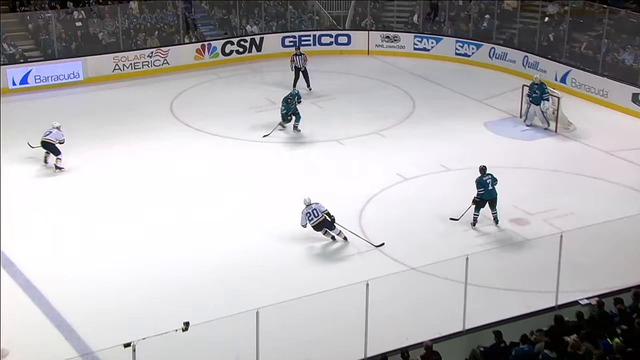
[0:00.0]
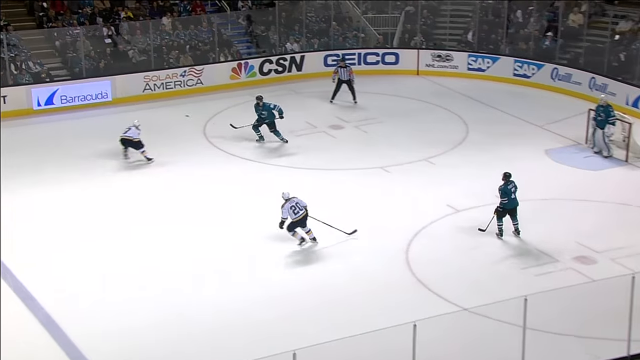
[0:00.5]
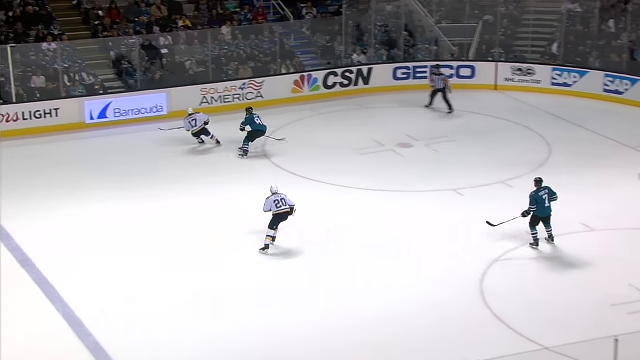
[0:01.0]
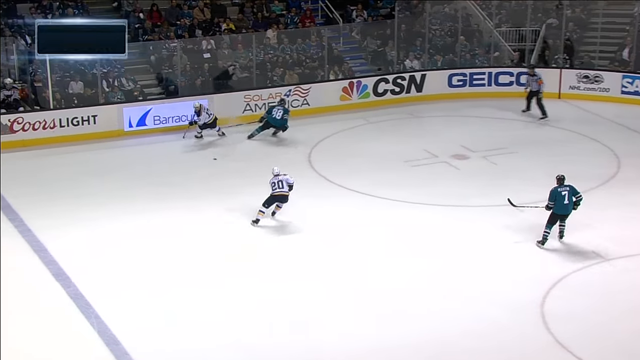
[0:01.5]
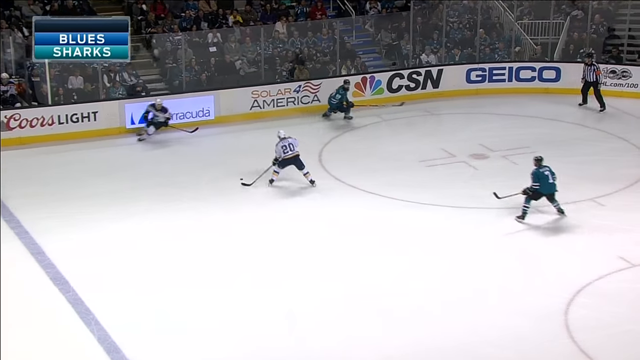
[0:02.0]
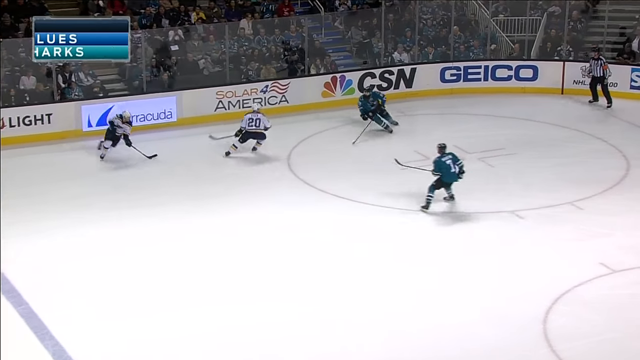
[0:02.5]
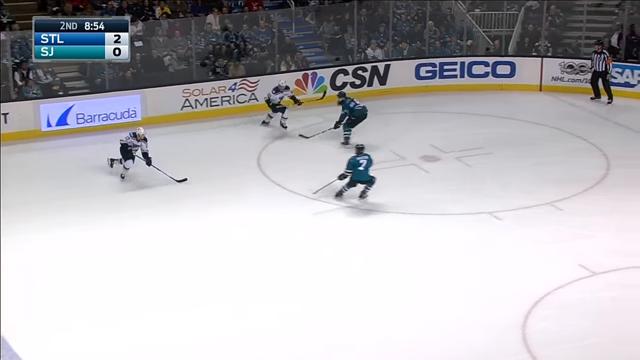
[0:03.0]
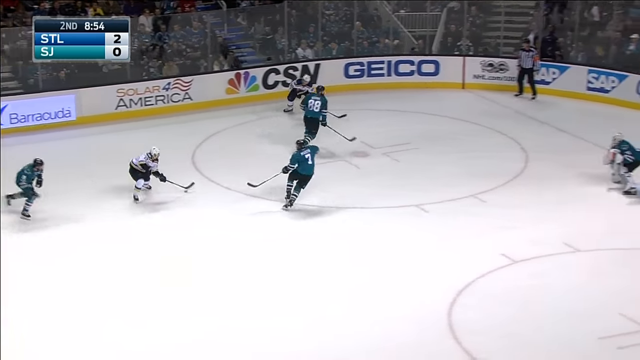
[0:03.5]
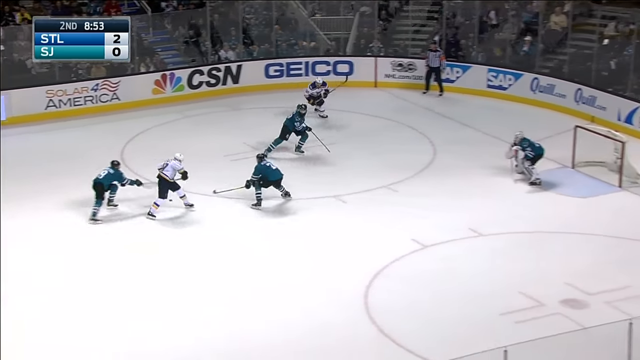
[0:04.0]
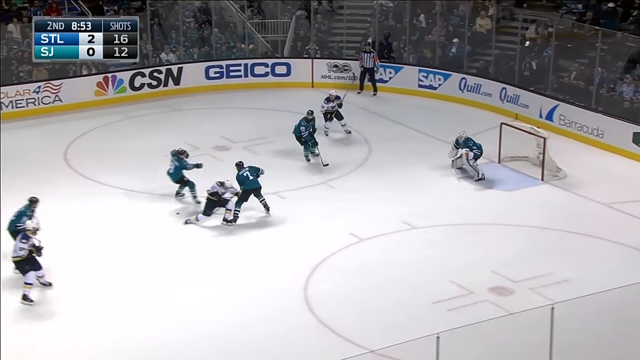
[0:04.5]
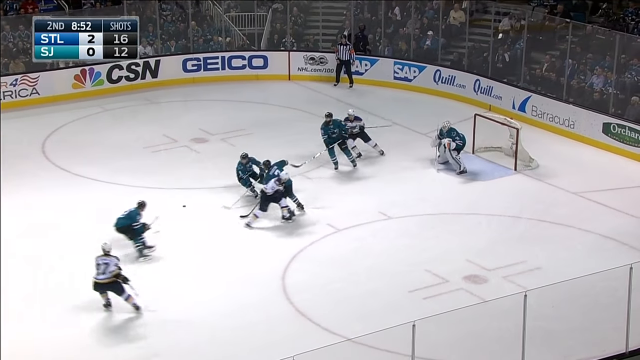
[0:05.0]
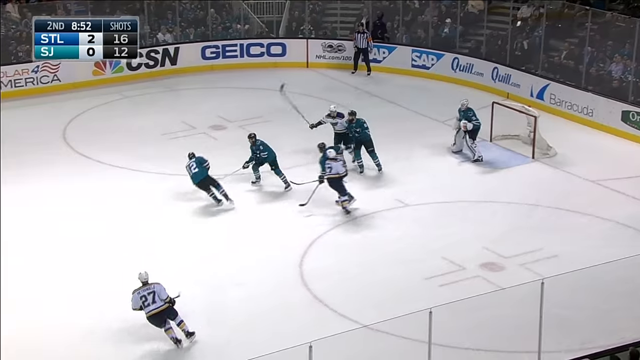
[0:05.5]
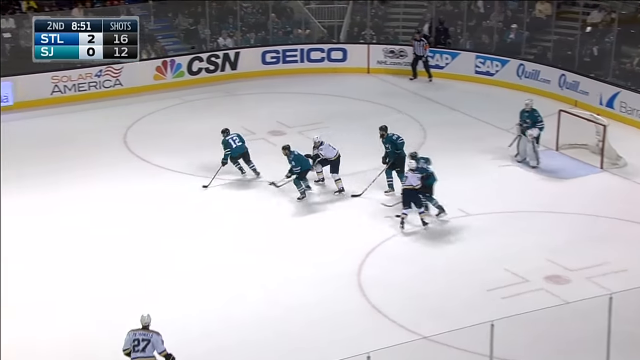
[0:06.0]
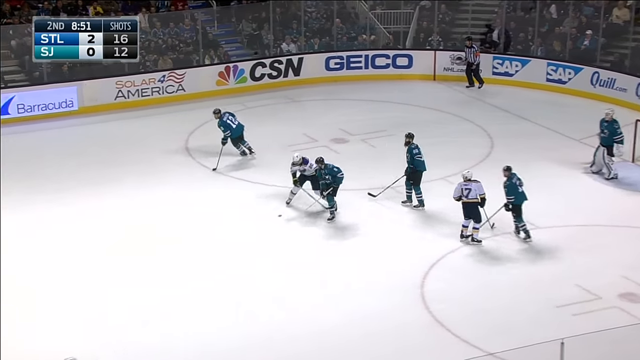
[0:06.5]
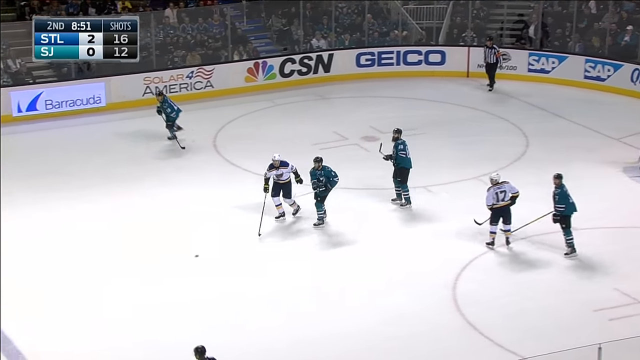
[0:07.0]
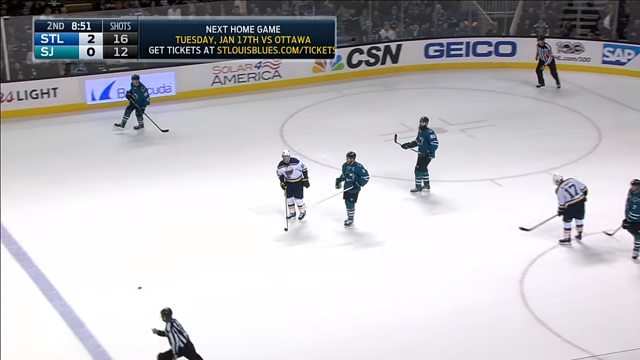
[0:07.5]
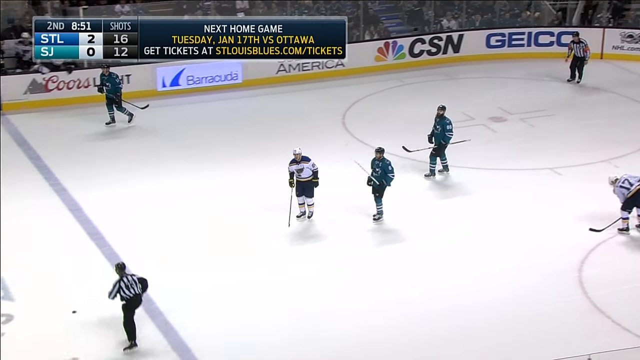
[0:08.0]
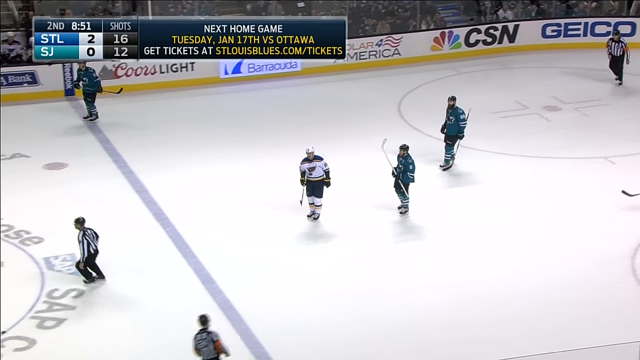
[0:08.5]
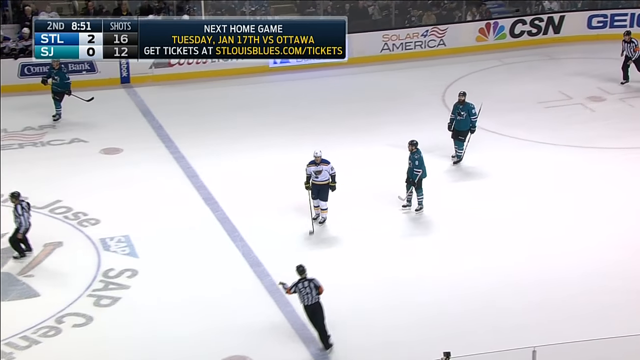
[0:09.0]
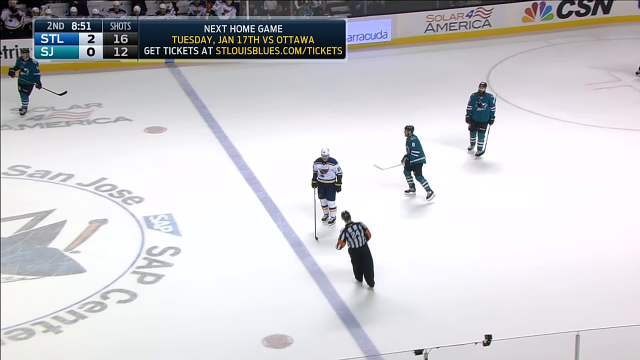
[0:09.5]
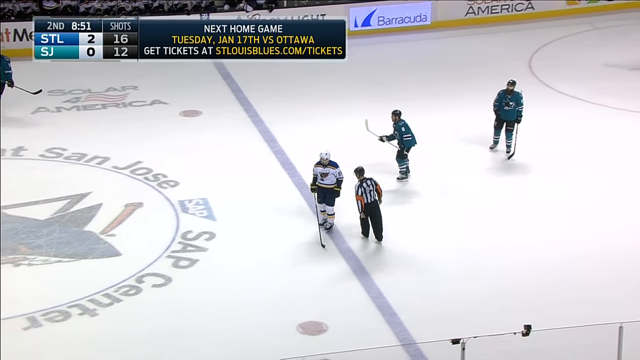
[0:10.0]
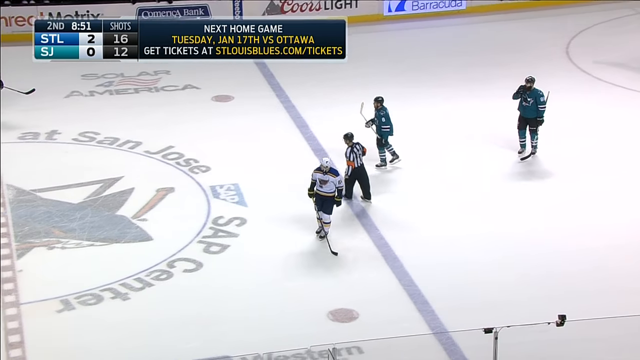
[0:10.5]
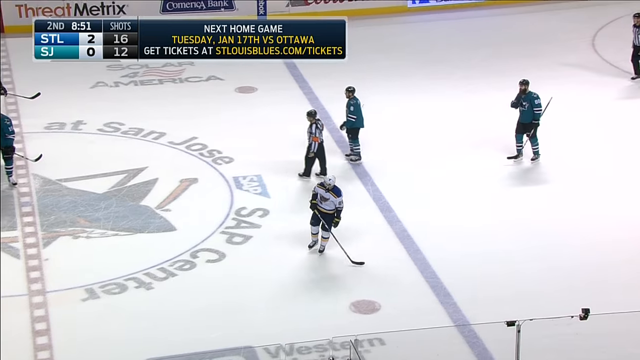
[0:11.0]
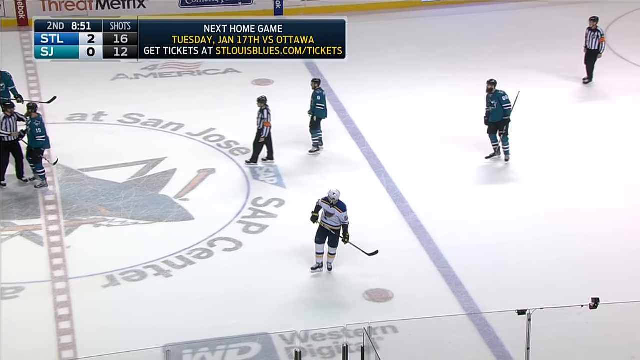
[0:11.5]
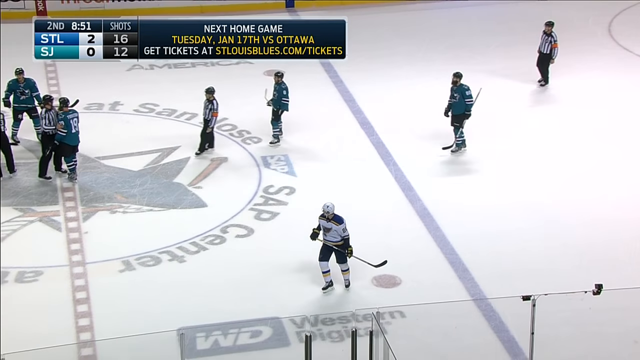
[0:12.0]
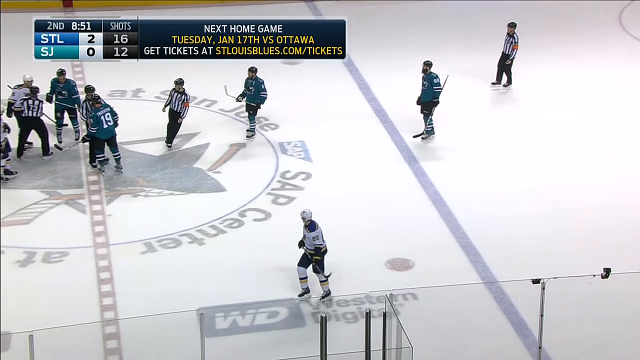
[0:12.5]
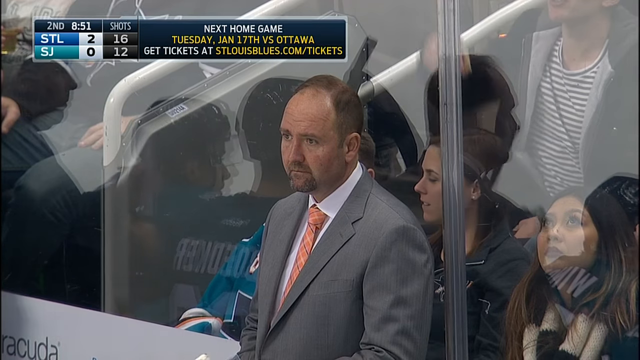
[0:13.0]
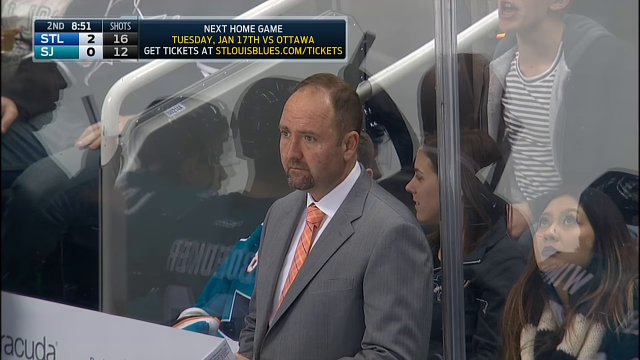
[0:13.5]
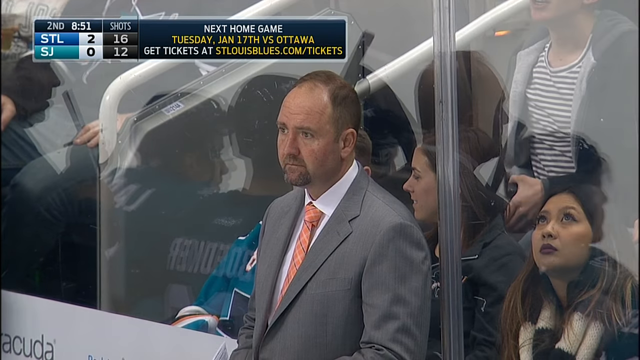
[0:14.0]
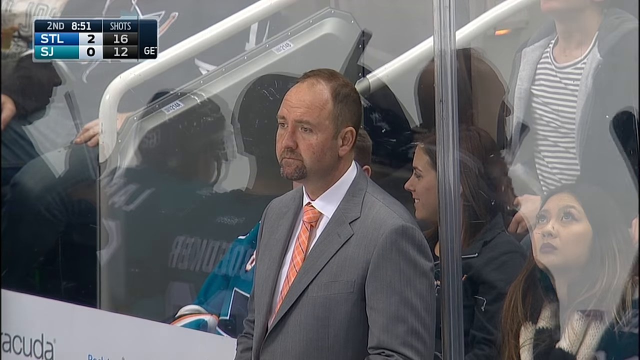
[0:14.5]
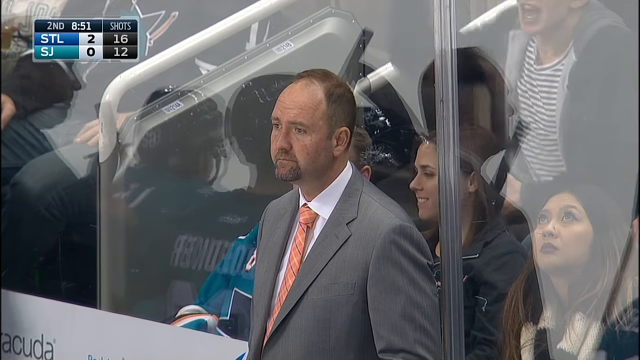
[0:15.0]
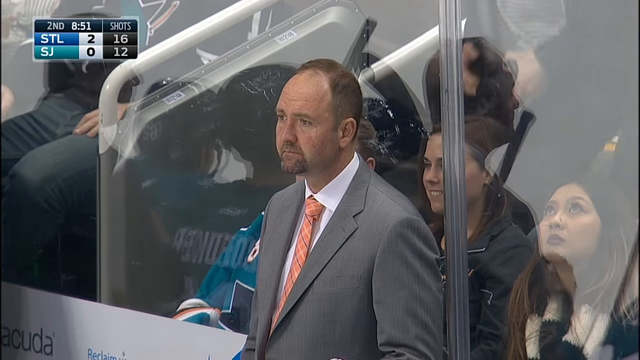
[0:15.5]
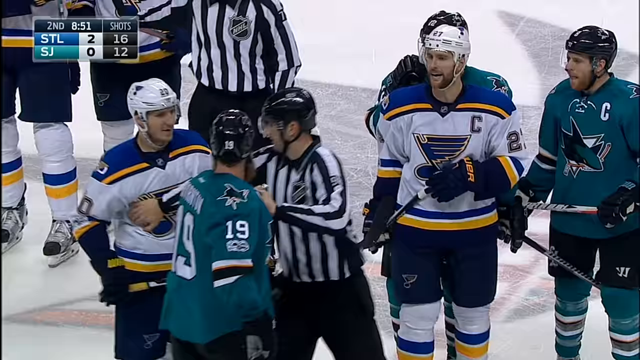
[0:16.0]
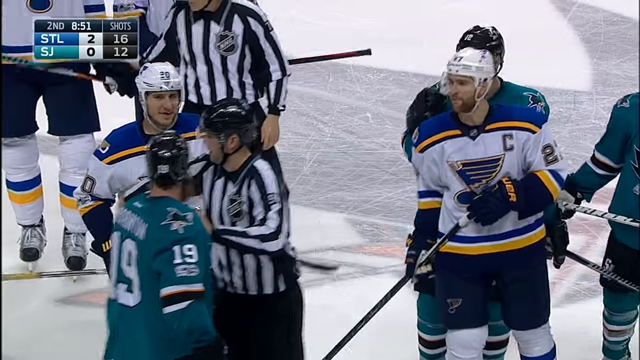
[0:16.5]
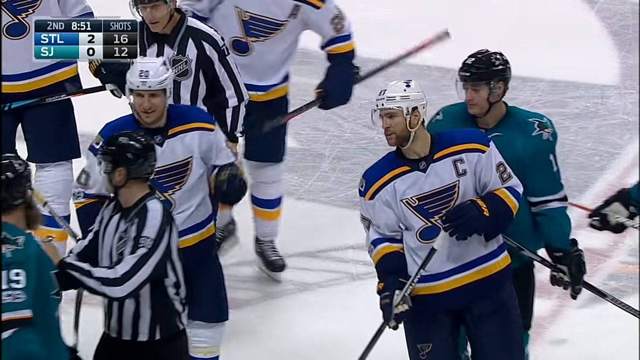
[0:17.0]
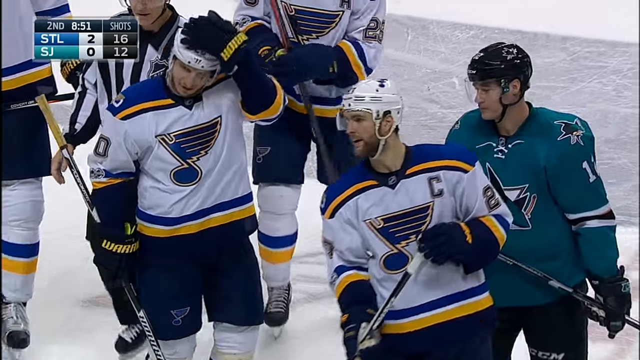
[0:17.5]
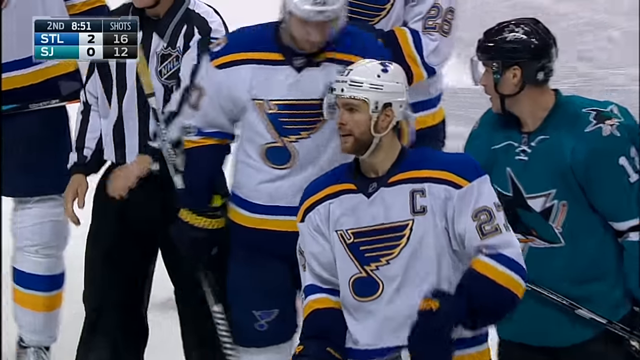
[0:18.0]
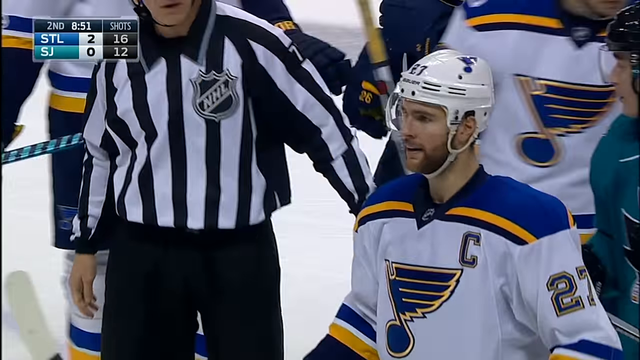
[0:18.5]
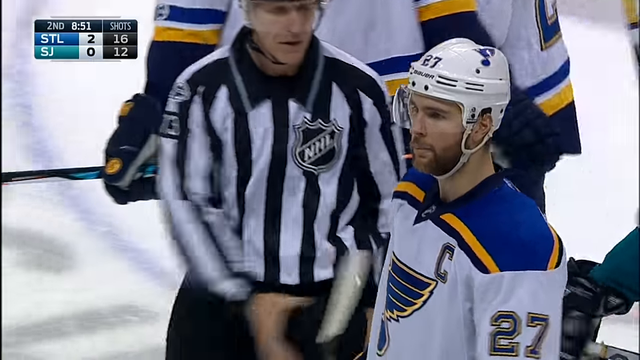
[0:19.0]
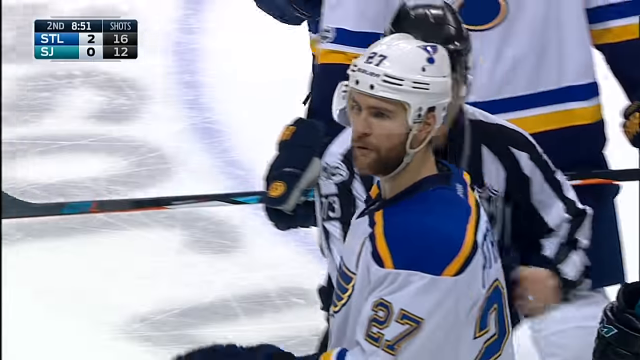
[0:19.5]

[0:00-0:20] An ice hockey game is underway between players in white and black and players in a teal color. It looks like St. Louis versus SJ, with a score of two to zero. The players almost get into a fight, and the referees have to get in between them. The blue team is the Sharks. A man in a suit who looks worried watches them. The players in white are also in blue and white and wear white hats or caps, while the players in teal appear to be in all teal and wear black hats. There are many advertisements around the rink, including Geico, CSN, Coors Light, Solar America and Threat Metrics. The game appears to be in the second quarter, and "SN" is in the bottom right corner of the screen.